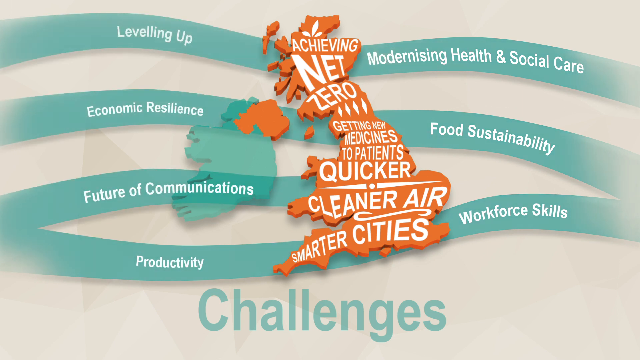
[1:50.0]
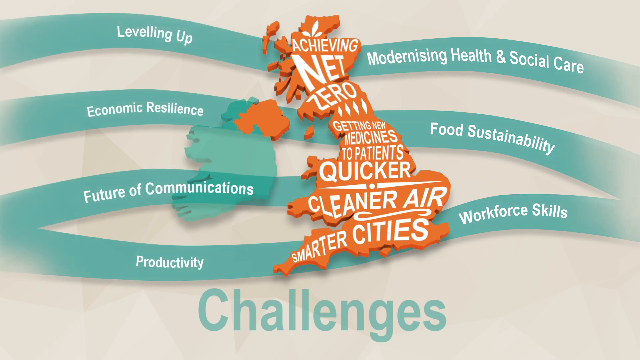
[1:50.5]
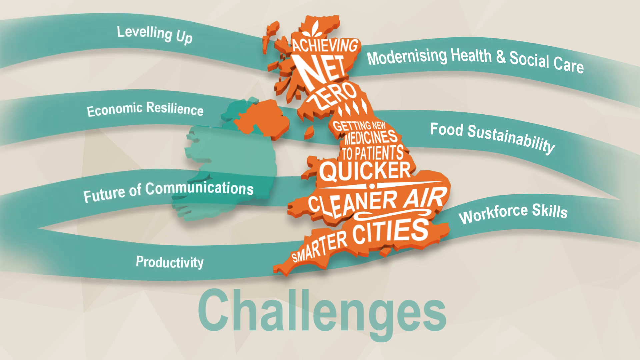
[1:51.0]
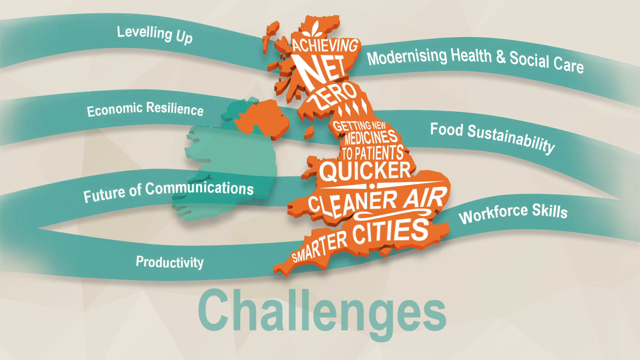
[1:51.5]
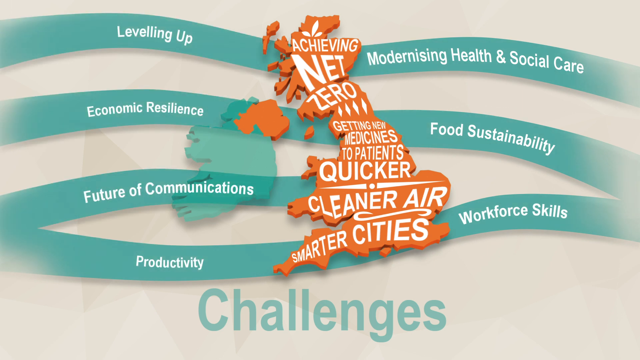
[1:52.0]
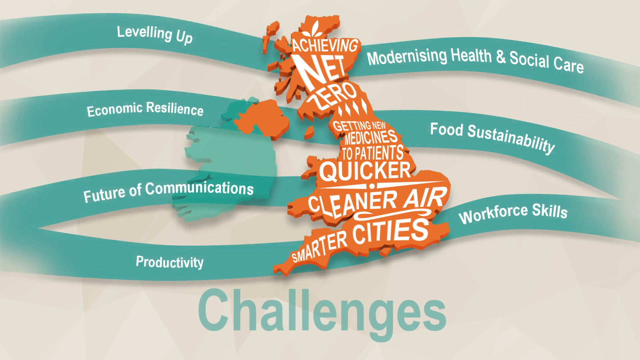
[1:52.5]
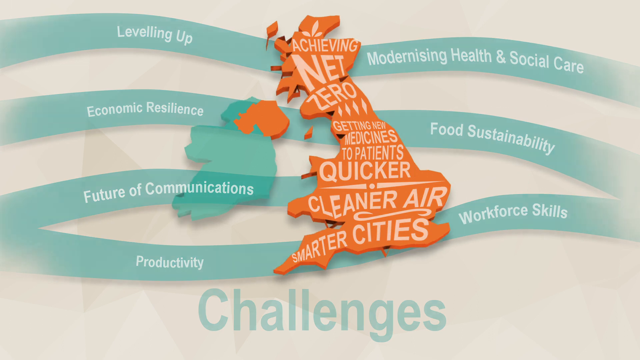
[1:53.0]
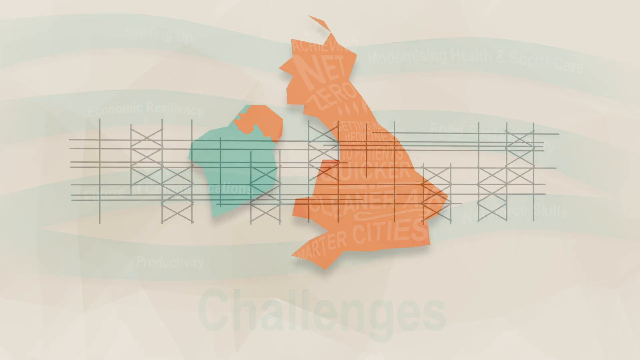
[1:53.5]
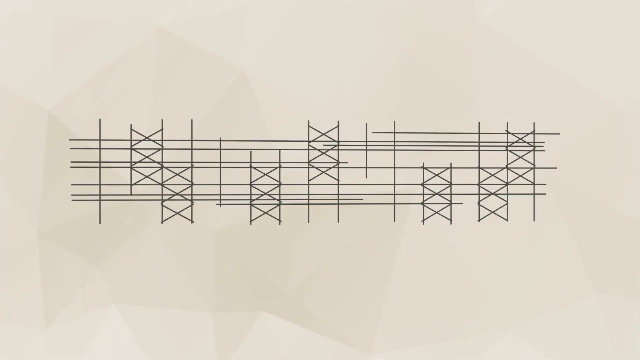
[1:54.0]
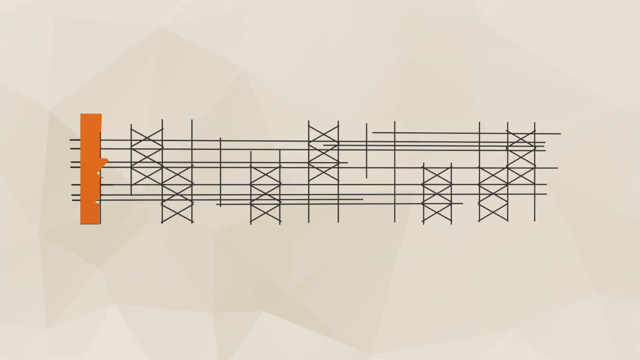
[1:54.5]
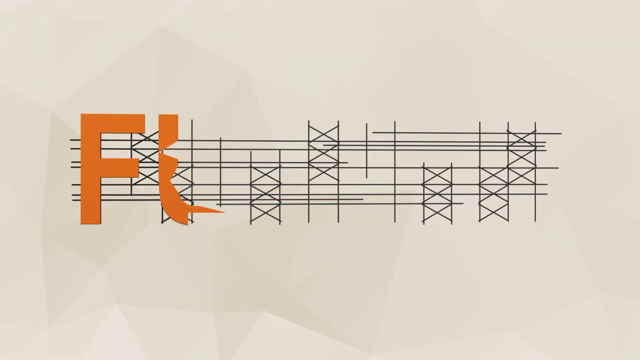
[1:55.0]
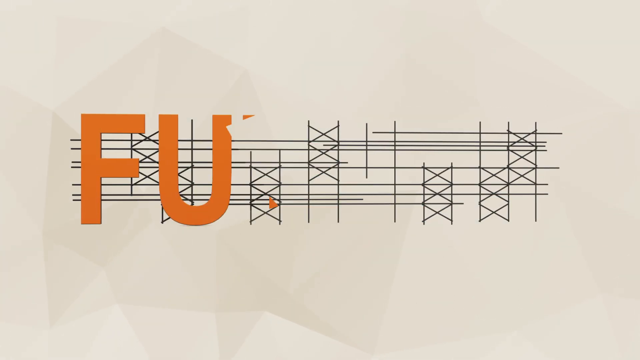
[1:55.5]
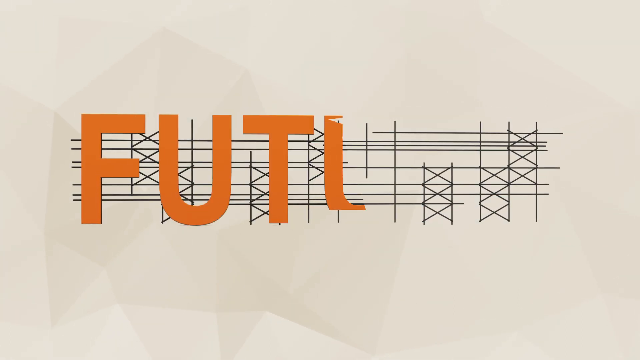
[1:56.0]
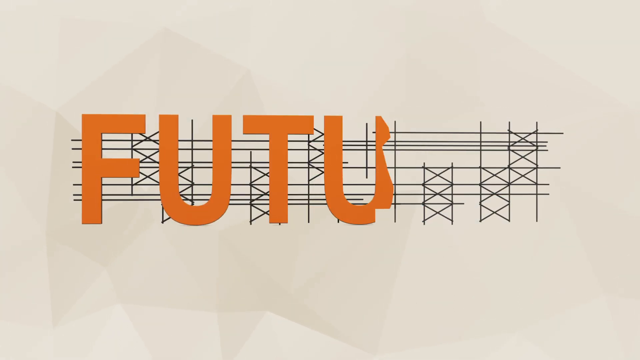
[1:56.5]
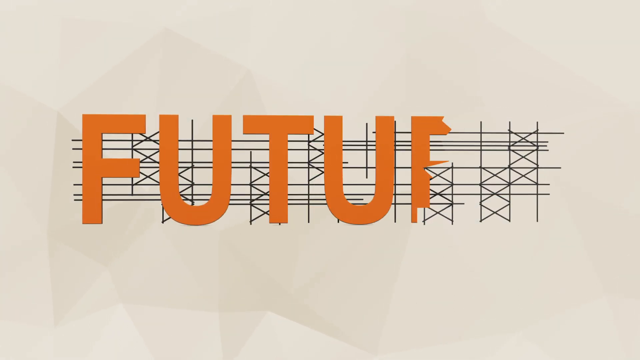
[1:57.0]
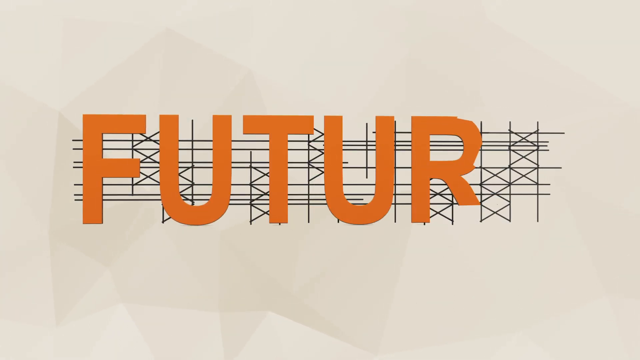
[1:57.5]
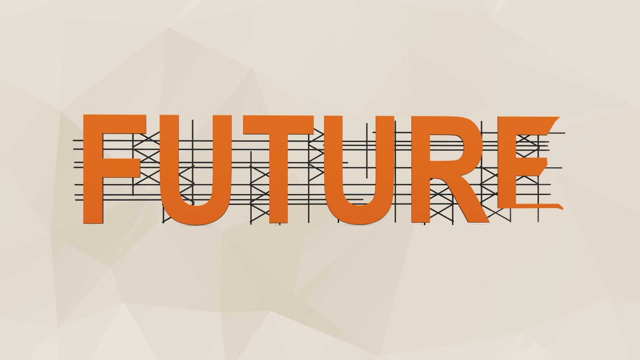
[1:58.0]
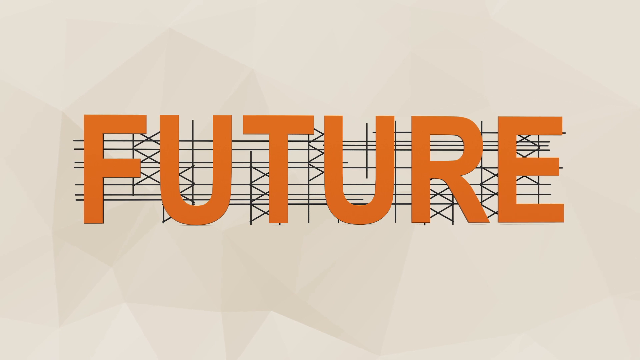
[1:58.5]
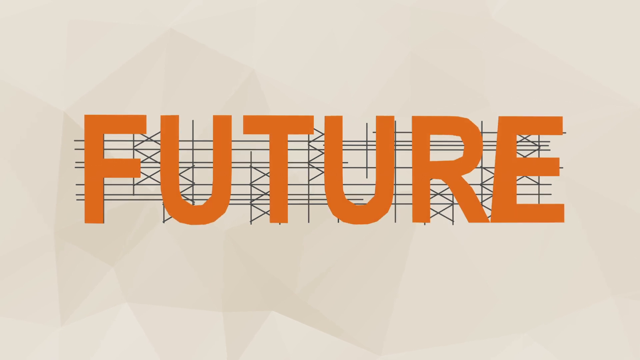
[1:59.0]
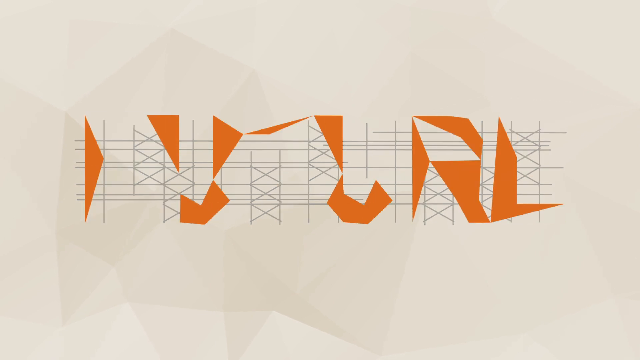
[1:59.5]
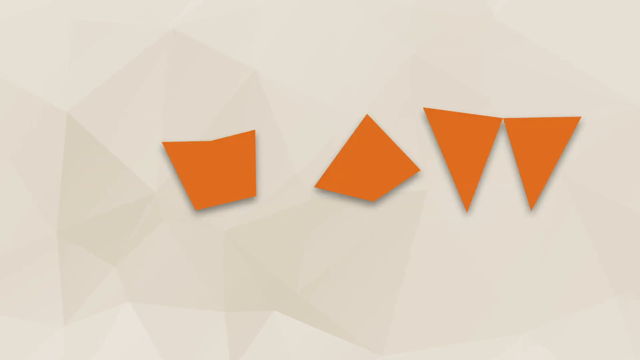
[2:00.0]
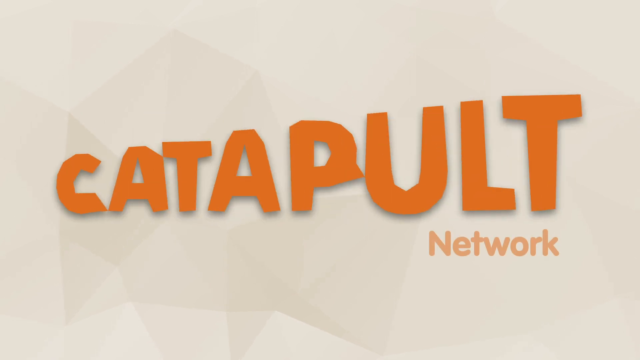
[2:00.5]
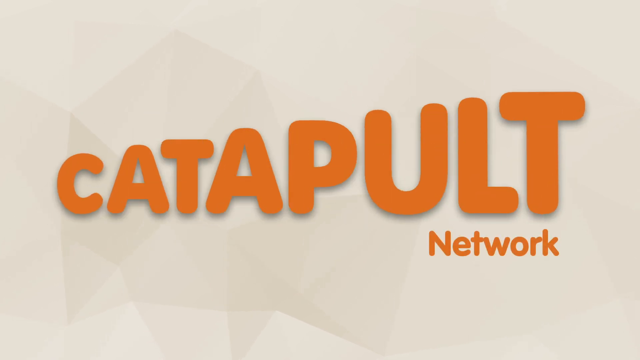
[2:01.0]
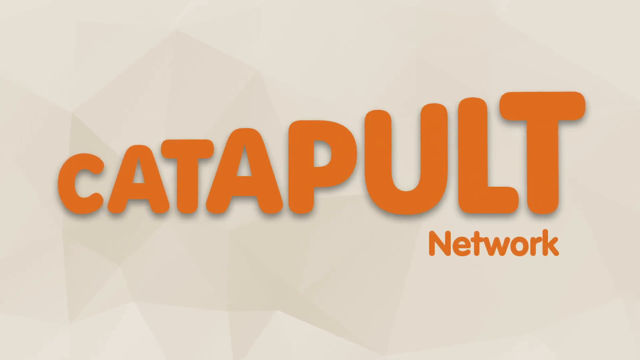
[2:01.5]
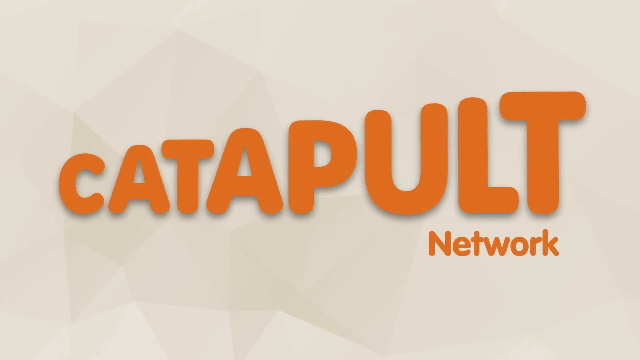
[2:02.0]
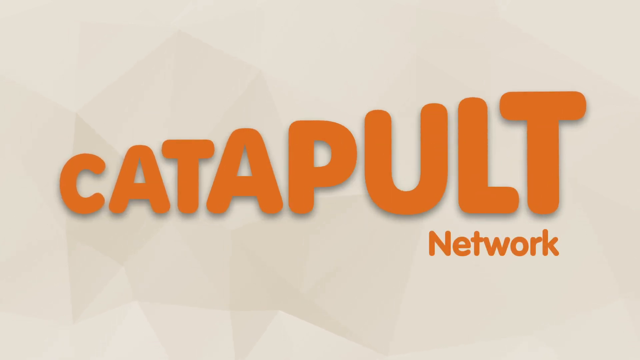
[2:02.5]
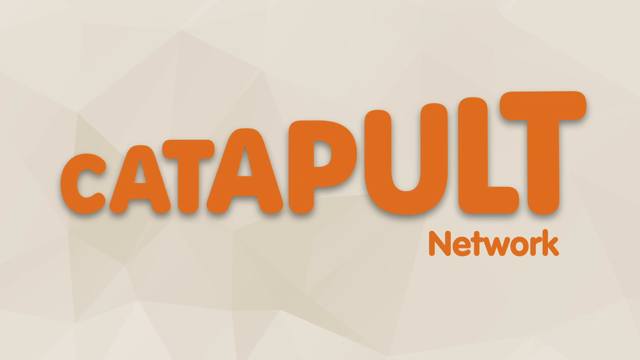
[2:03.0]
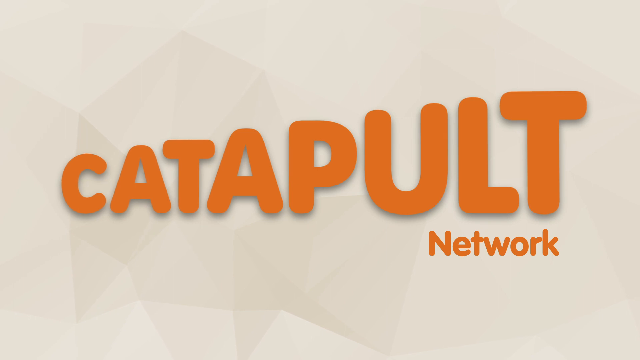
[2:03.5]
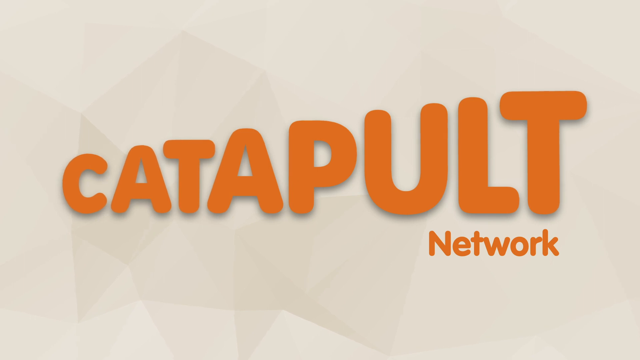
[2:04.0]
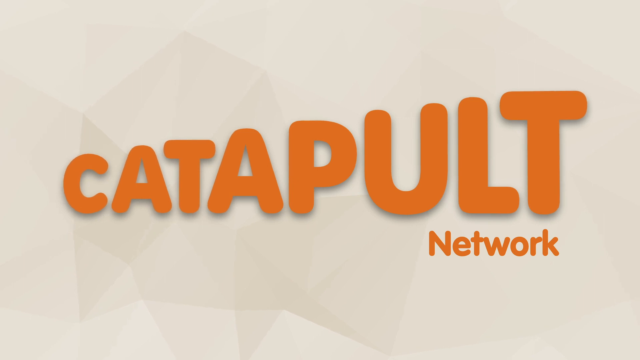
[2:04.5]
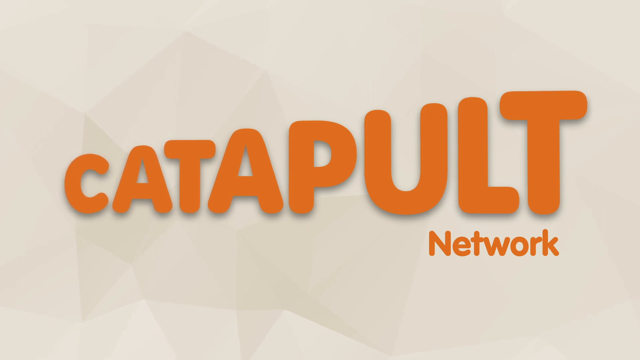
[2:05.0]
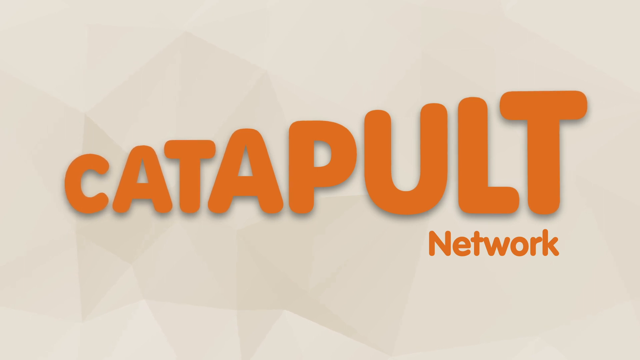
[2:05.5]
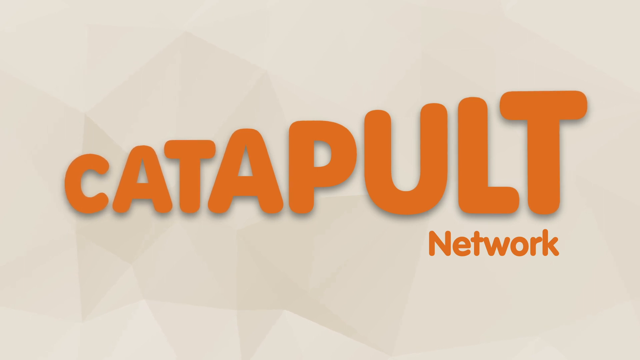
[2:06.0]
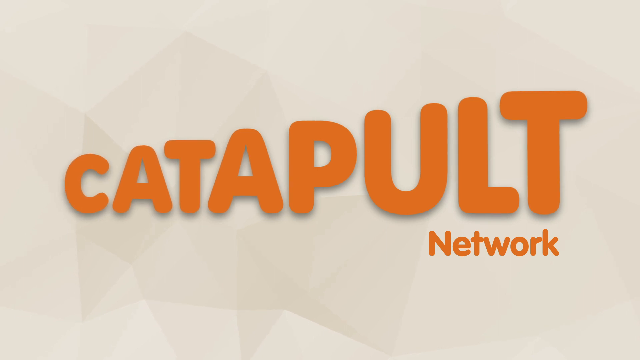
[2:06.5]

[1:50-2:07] The next section looks at the future of the UKRI and the Catapult Network and success on many challenges across the United Kingdom: modernising health and social care, food sustainability, levelling up industry, levelling up the economy, economic resilience, a future of communication, enhancing productivity and building workforce skills. An orange United Kingdom is shown with overlaid words: "achieving net zero", "getting new medicines to patients quicker", "cleaner air", "smarter cities".